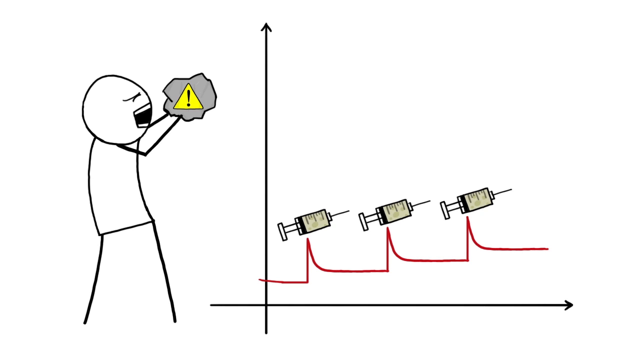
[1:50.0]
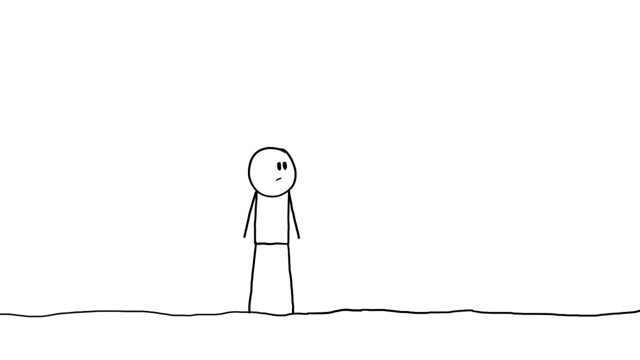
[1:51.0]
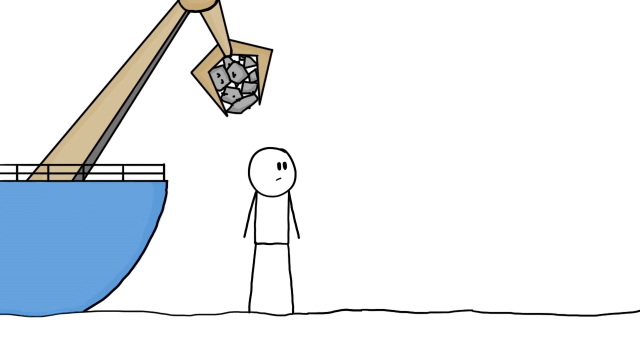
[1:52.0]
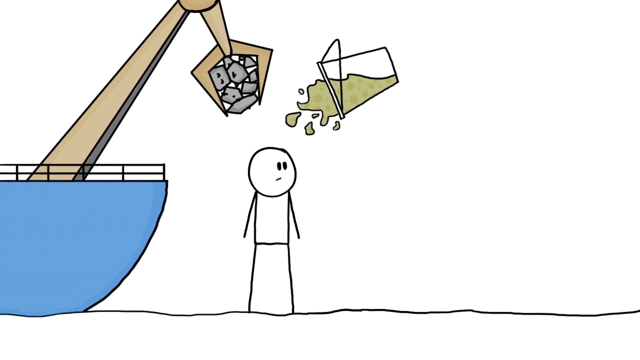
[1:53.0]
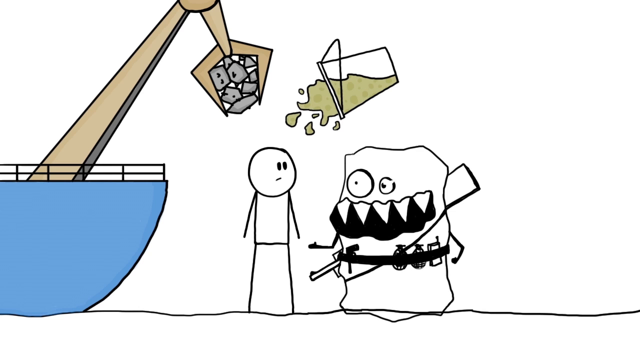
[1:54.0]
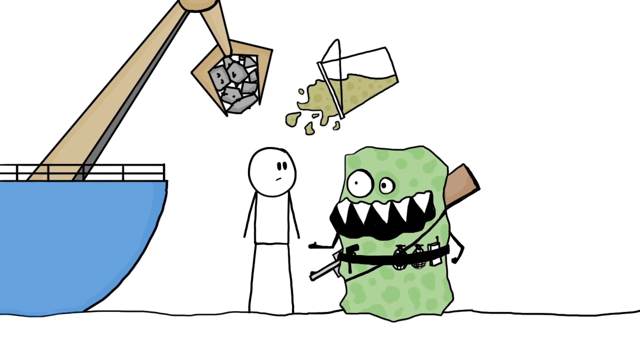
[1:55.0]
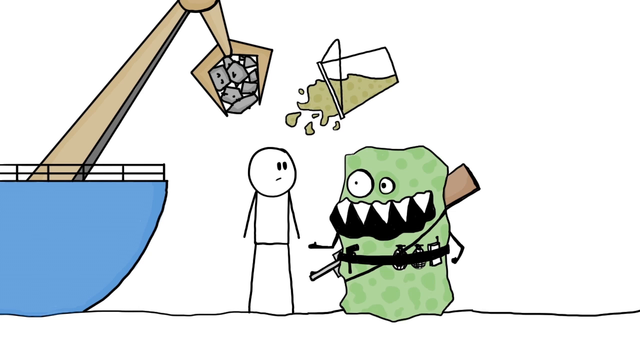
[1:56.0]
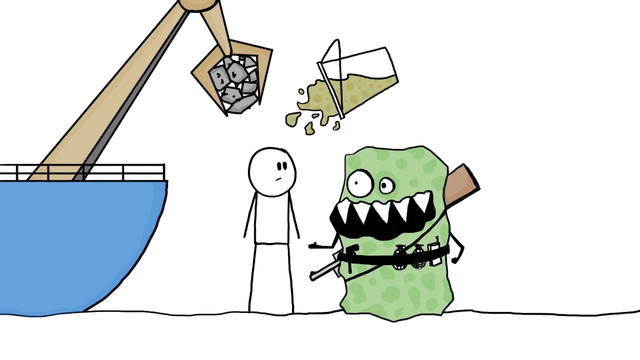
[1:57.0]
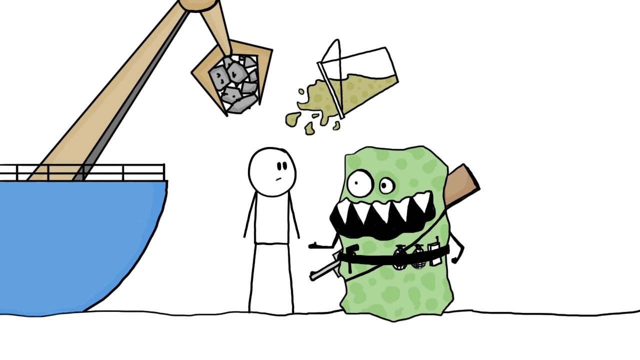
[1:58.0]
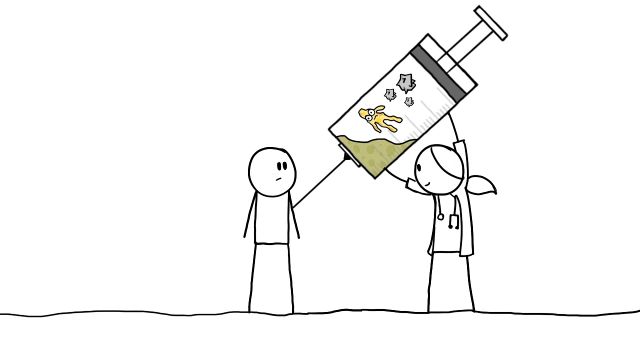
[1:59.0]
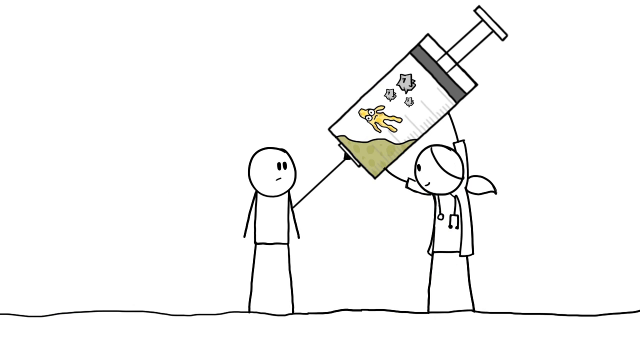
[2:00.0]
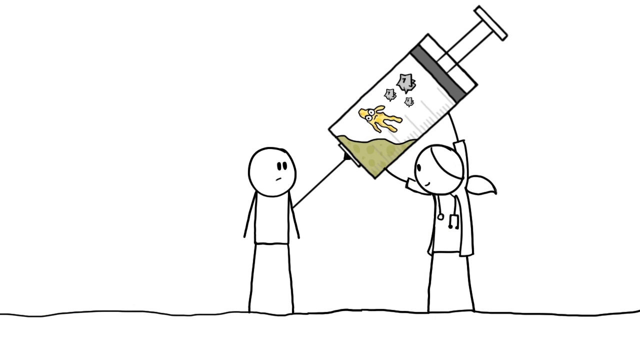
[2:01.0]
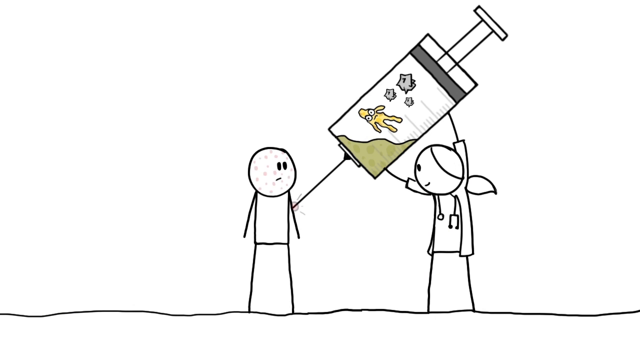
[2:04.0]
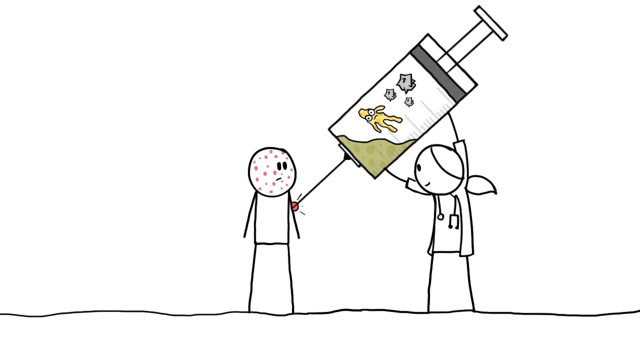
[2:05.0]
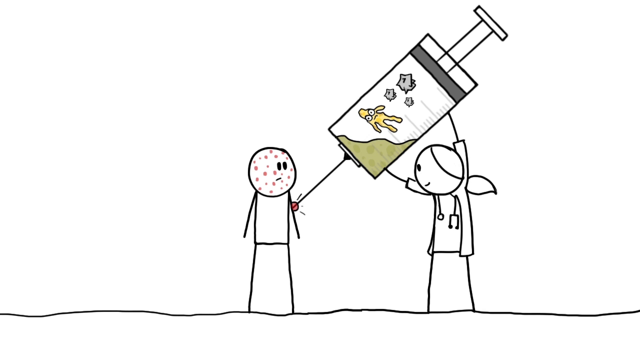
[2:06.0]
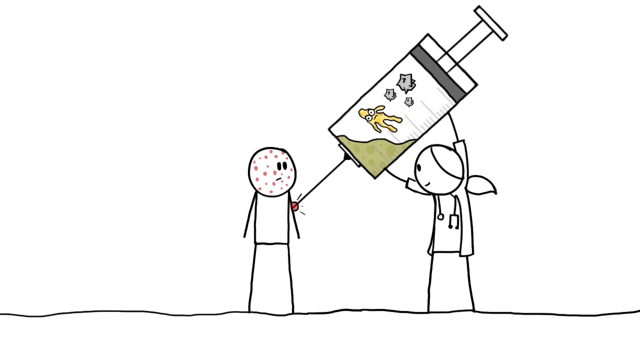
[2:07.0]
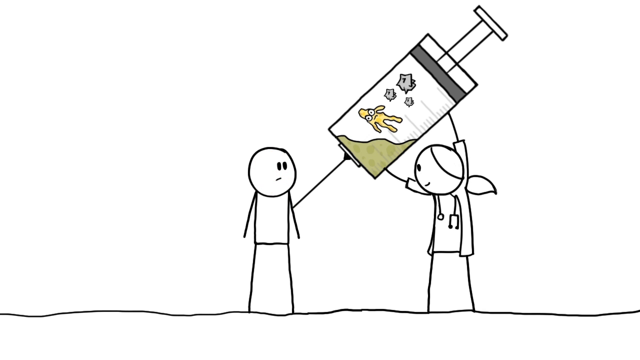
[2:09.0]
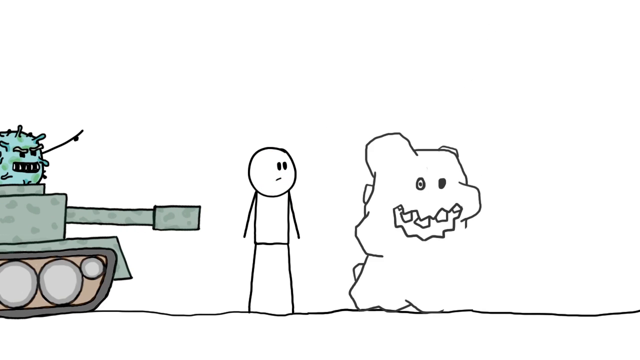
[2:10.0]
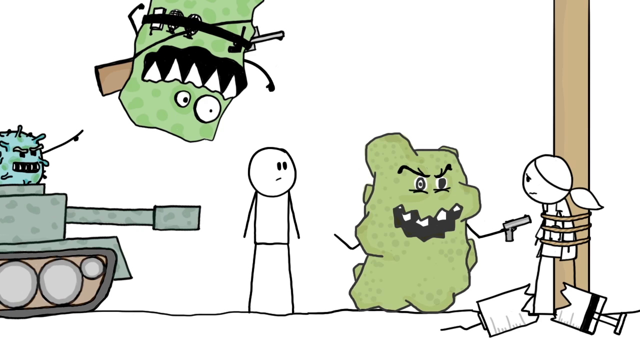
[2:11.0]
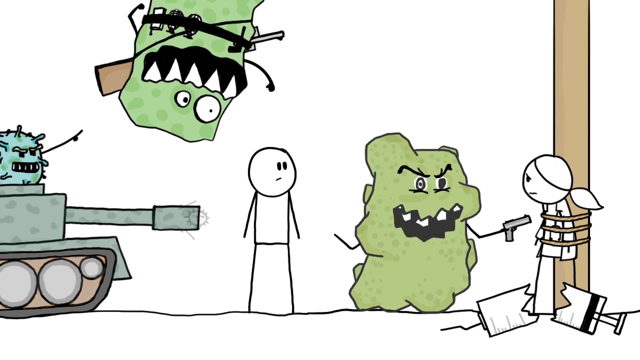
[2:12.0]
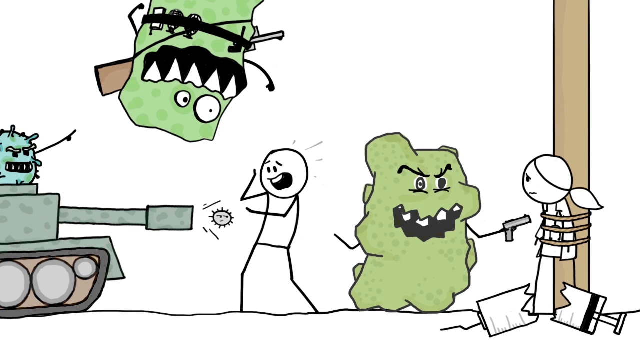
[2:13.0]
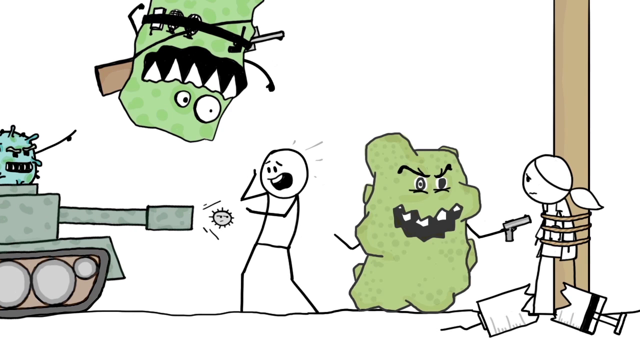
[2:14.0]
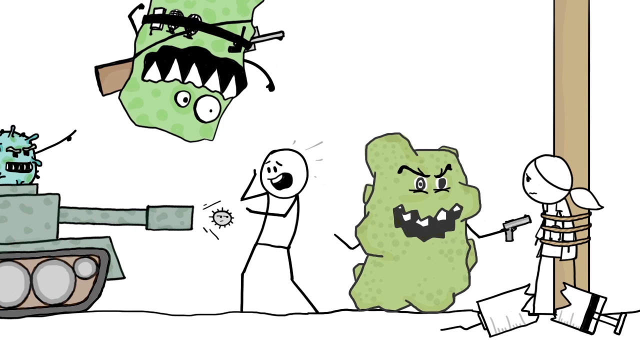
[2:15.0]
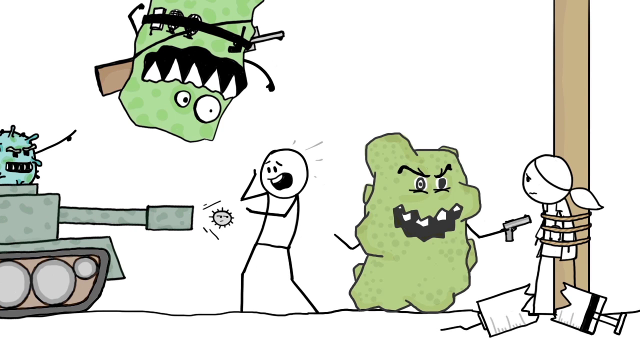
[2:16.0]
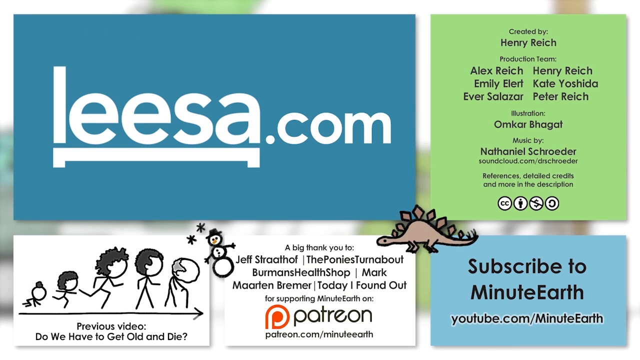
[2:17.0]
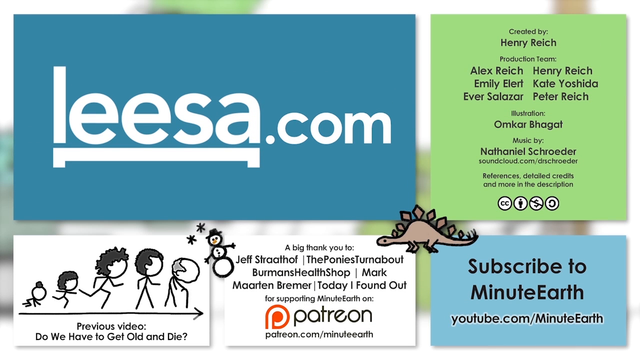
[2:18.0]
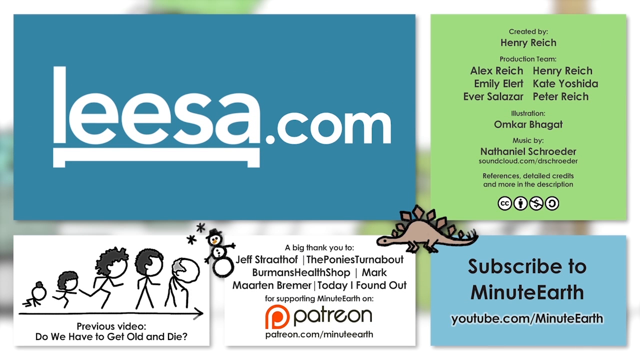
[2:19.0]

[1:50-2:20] A little stick man is in the middle of the screen. On the right-hand side is a green germ with fangs and a gun, with a clear bucket of green liquid above his head about to fall on the stick man. On the left-hand side is a large blue boat with a pincer grabber that seems to be holding loads of grey rocks above the man's head. The next scene shows two stick people: one, who looks like a doctor, holds a massive syringe and injects it into the other. The syringe contains green stuff with a yellow little man and also the grey rock-like substance. The injected stick man turns red, with what looks like measles on his face, and his arm looks like it is hurting; then it goes away. Next, a tank and a germ with a gun hold the doctor hostage, tied up on a pole. The tank is driven by a green monster or germ, and at the top of the screen a green monster with a gun is upside down. The tank shoots the other little man who was injected. The end screen says "leesa.com" and "created by Henry Reich" in a green square, shows the previous video and says "subscribe to MinuteEarth, youtube.com/MinuteEarth", with cartoons of a dinosaur, stick people and a snowman, and shows the Patreon page.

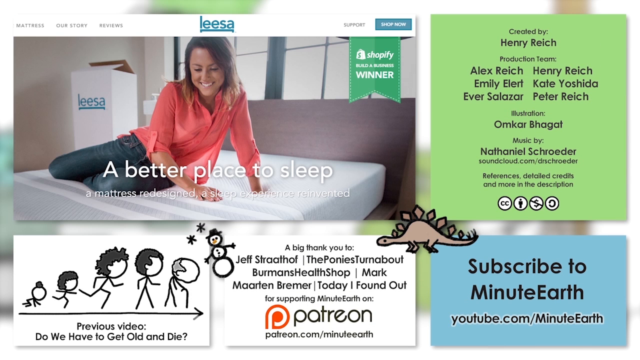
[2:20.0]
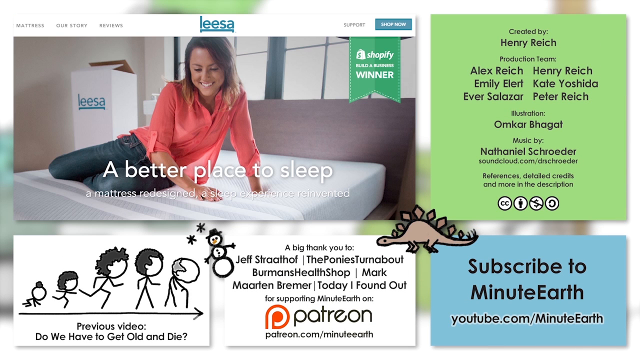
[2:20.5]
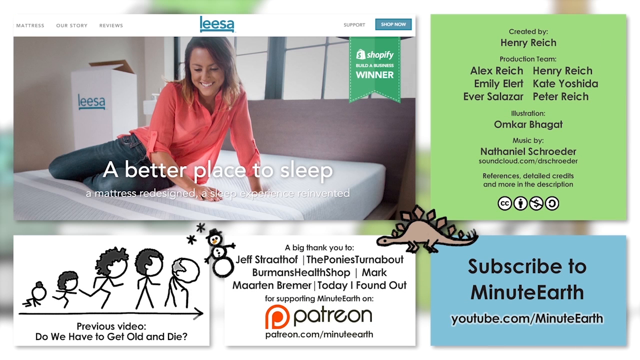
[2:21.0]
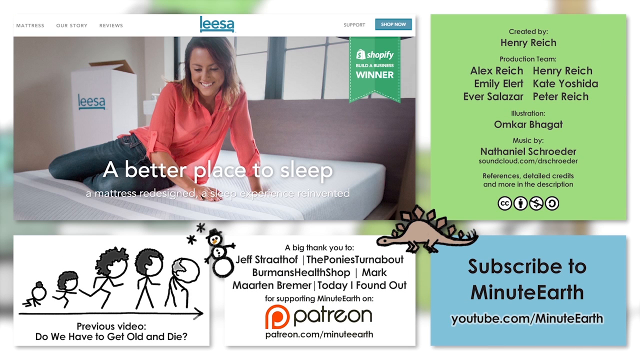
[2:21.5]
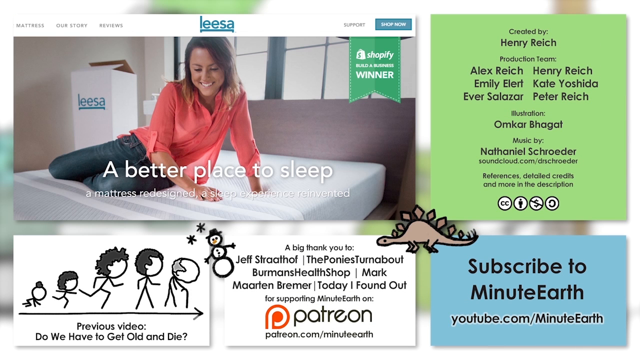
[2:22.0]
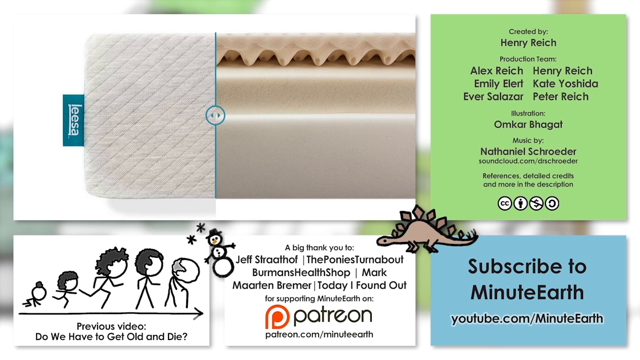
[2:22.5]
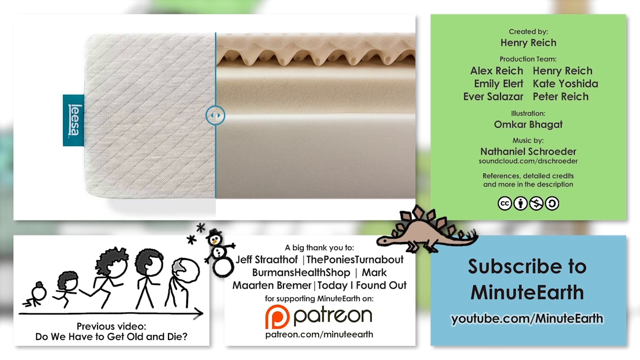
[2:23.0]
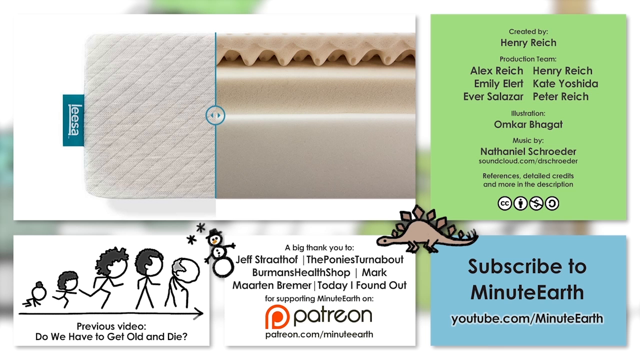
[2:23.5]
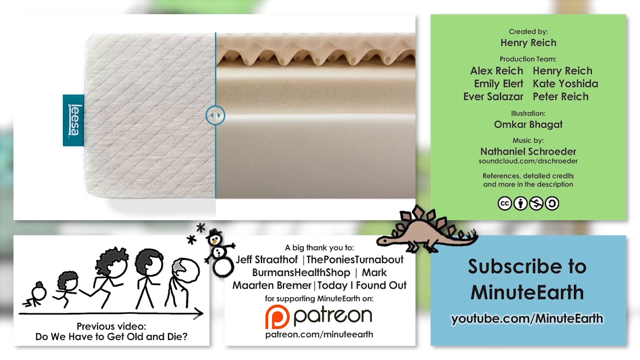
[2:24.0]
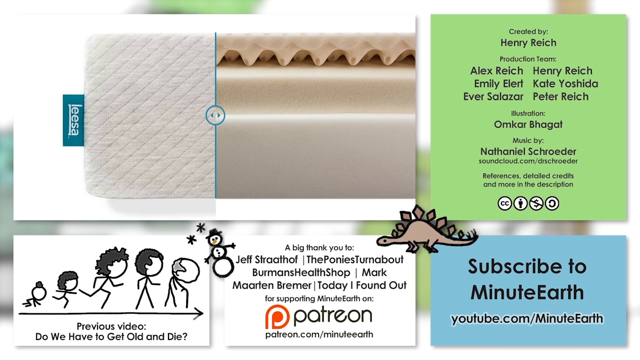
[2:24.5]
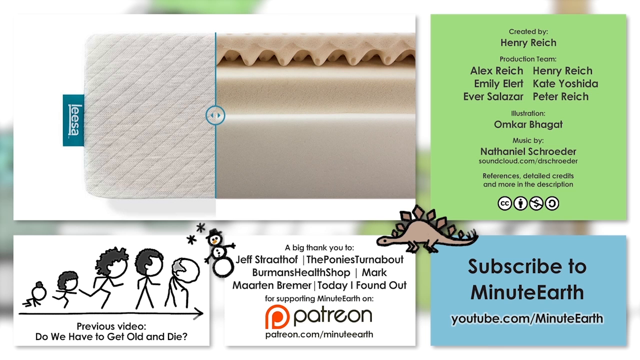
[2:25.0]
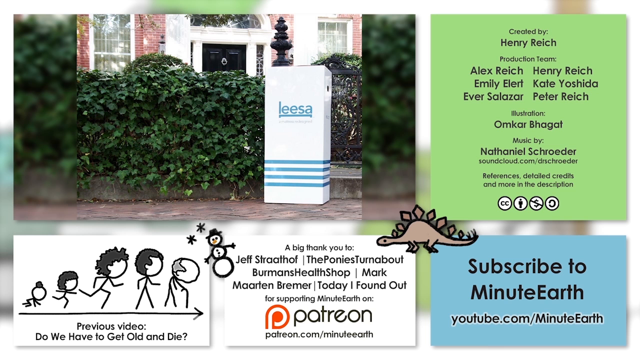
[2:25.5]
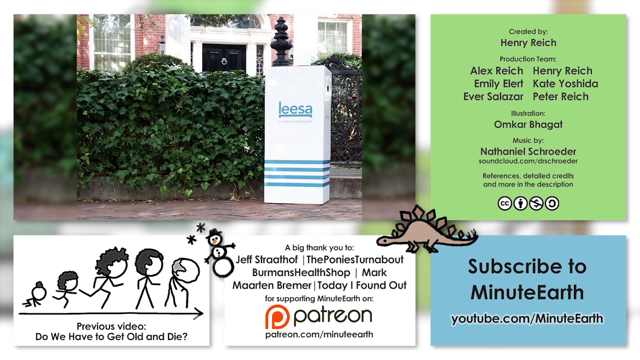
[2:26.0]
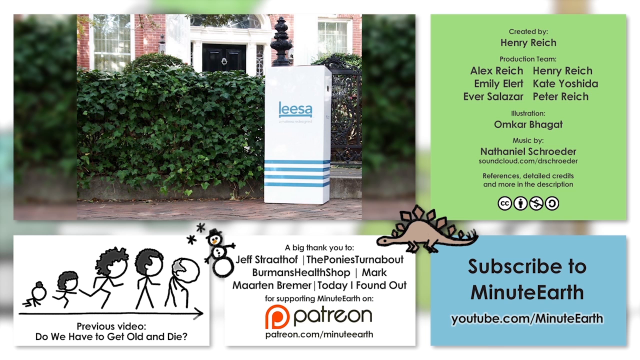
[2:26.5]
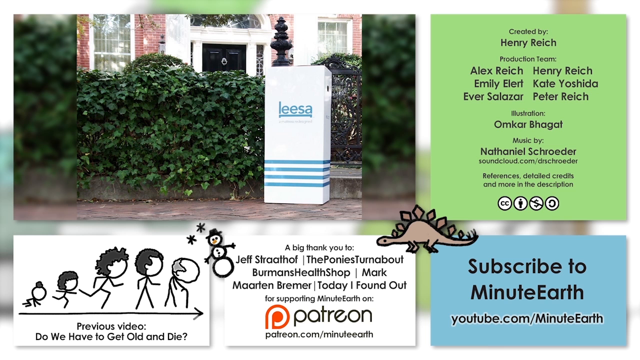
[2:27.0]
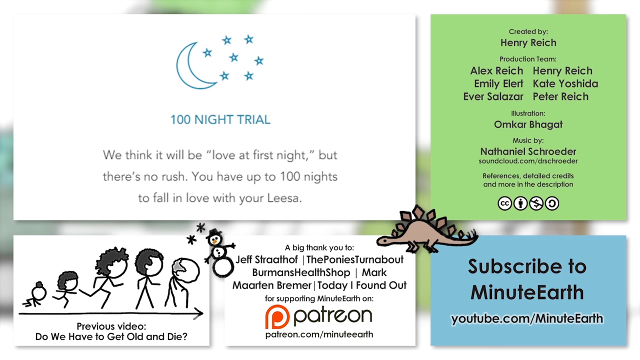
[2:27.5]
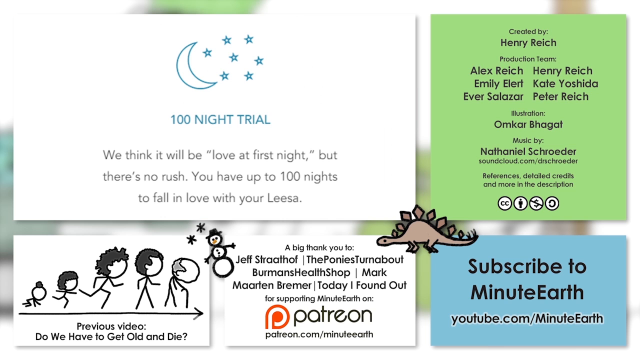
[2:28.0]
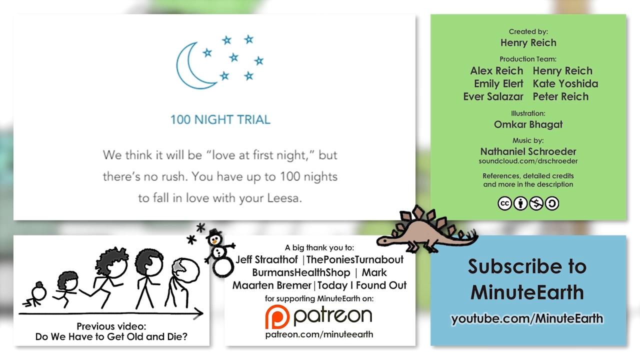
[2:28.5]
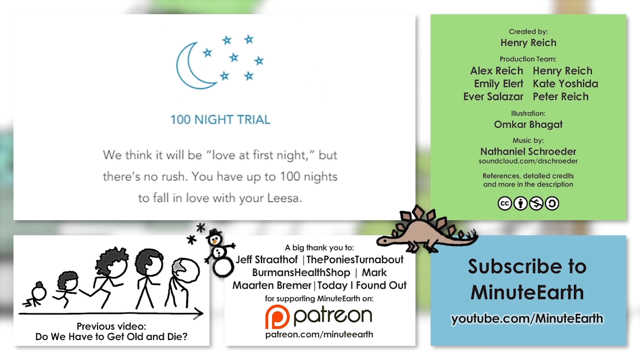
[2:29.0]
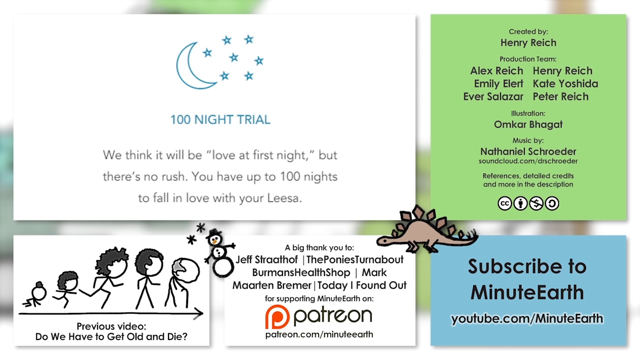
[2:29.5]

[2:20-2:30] An advertisement says "a better place to sleep, a mattress redesigned, a sleep experience reinvented" and shows a picture of a woman in a pink top and blue jeans laying on a bed. On the right it says "Shopify" and on the left of the box it says "Leesa the company". There are other advertisements on the page: one in a green box, one in a blue box, one in a white box and another white box. A close-up of the mattress shows its inside and the materials it is built from. A box is then outside somebody's house, maybe in the driveway; it is a white box with four blue lines on it that says "Leesa". A drawing of a little crescent moon with stars appears with the text "100 night trial" and "You think it will be love at first night, but there's no rush. You have up to 100 nights to fall in love with your Leesa."